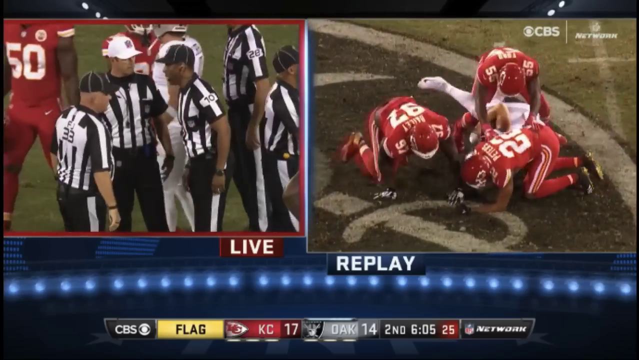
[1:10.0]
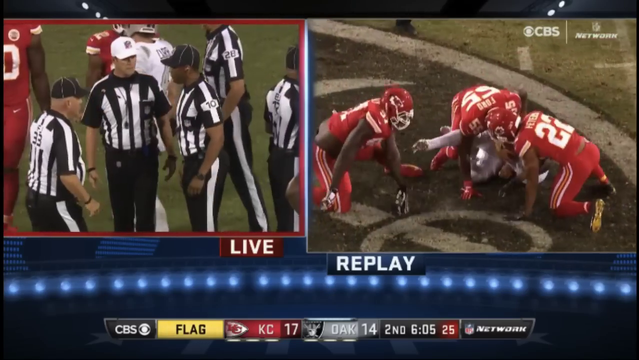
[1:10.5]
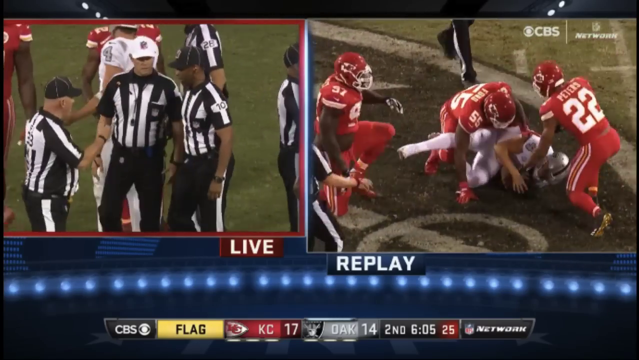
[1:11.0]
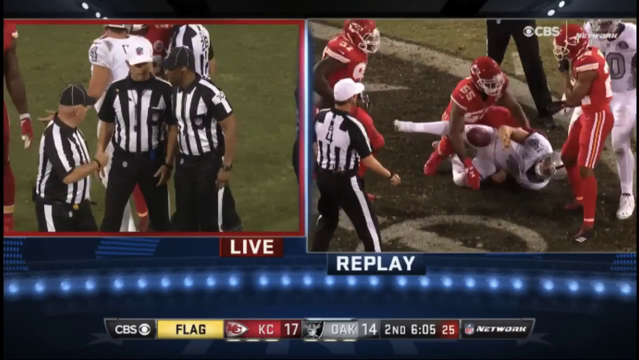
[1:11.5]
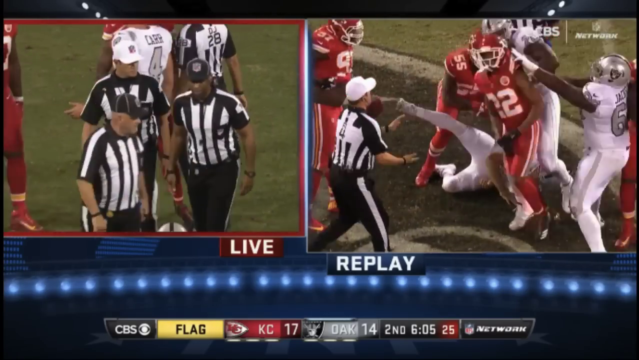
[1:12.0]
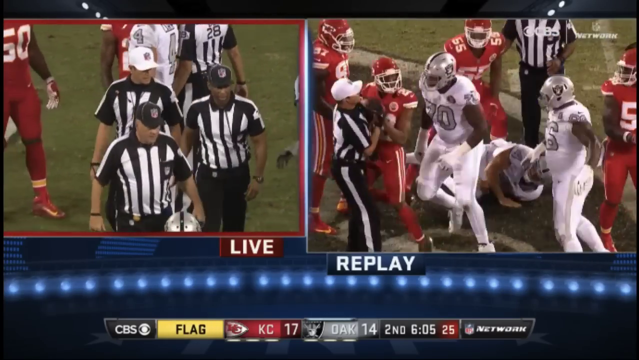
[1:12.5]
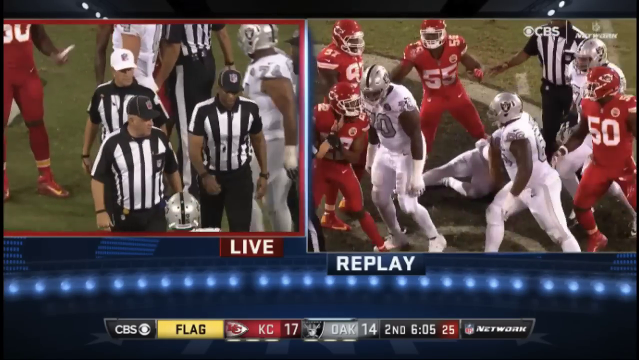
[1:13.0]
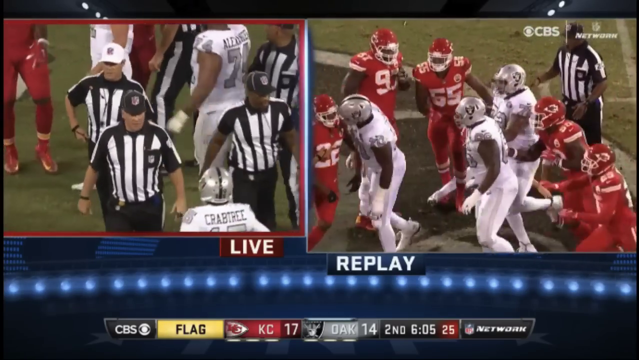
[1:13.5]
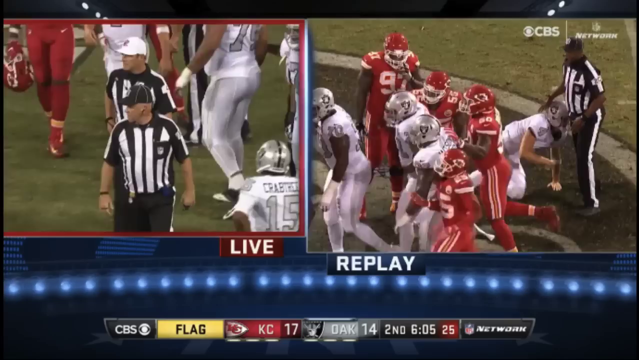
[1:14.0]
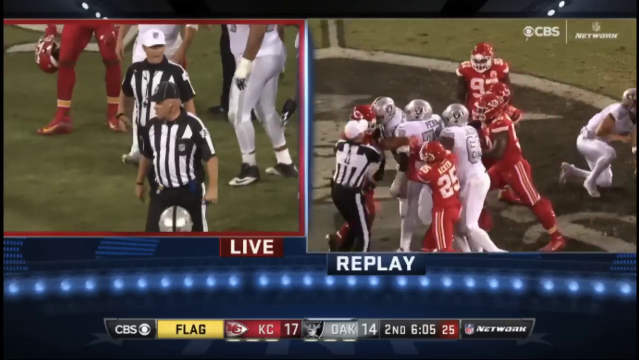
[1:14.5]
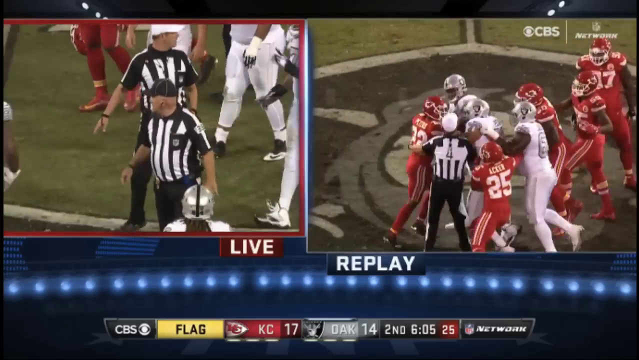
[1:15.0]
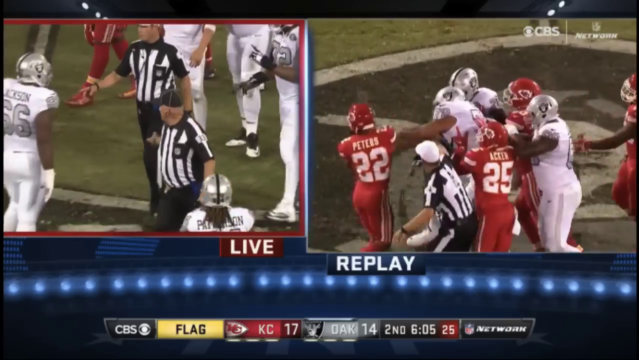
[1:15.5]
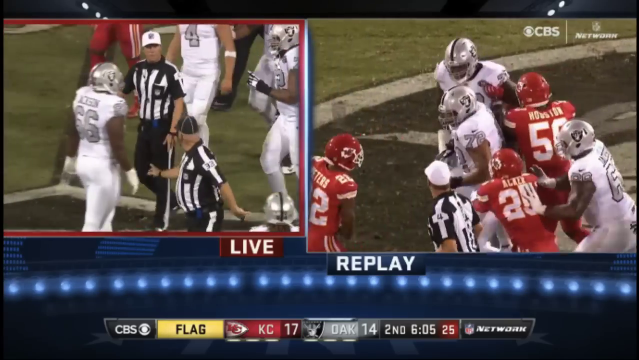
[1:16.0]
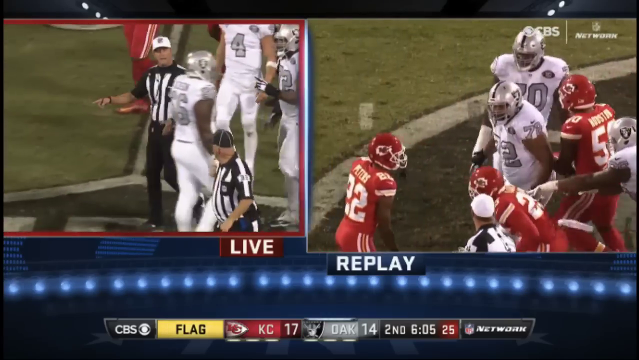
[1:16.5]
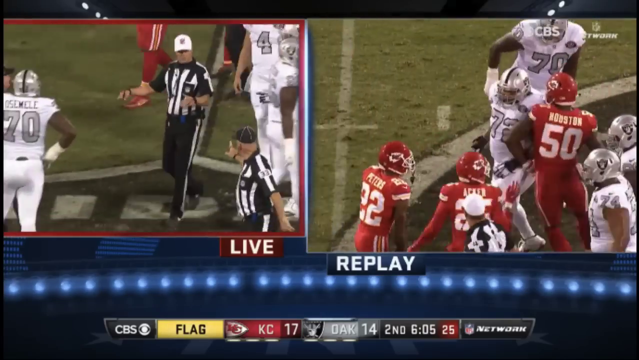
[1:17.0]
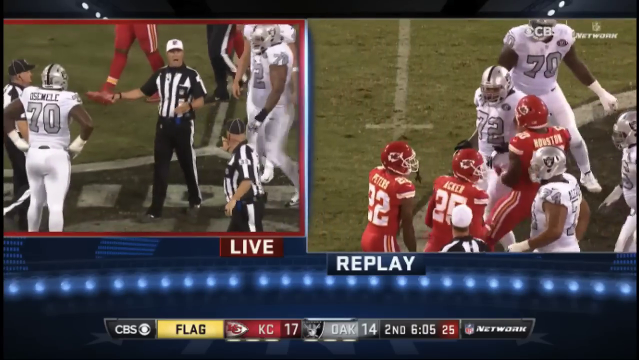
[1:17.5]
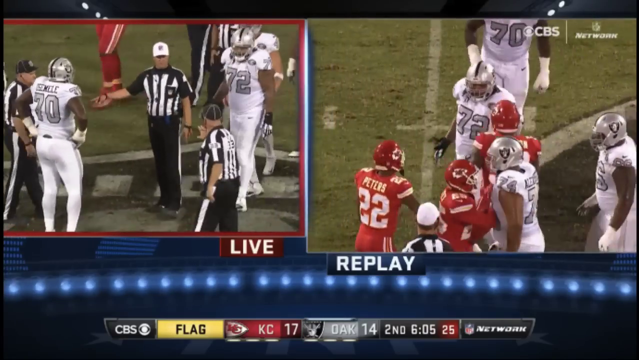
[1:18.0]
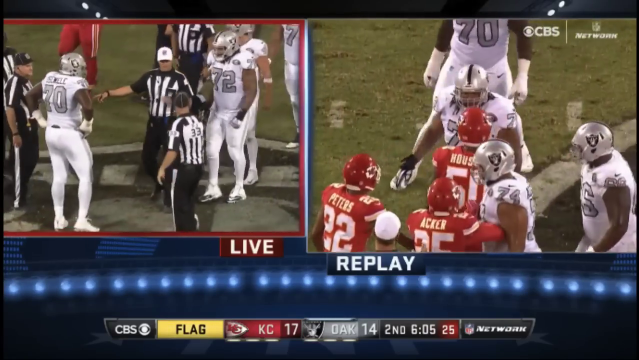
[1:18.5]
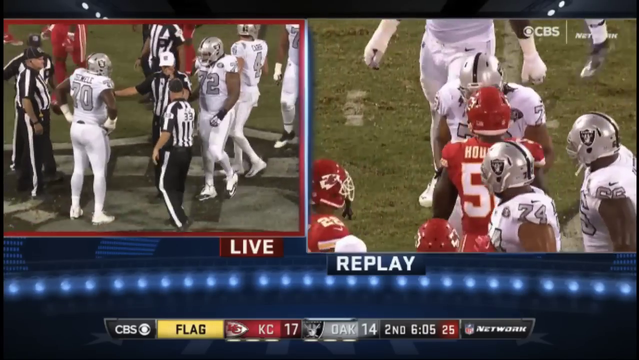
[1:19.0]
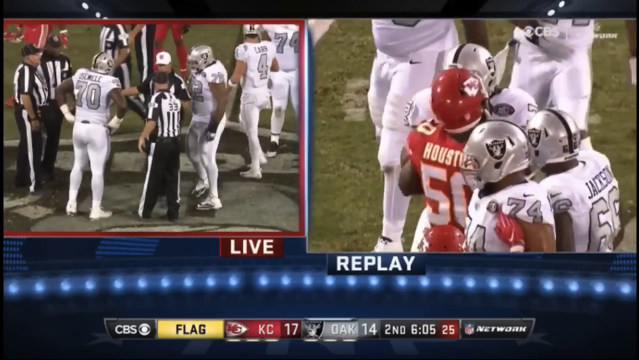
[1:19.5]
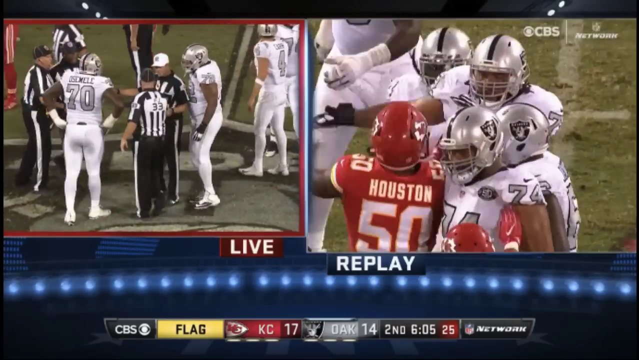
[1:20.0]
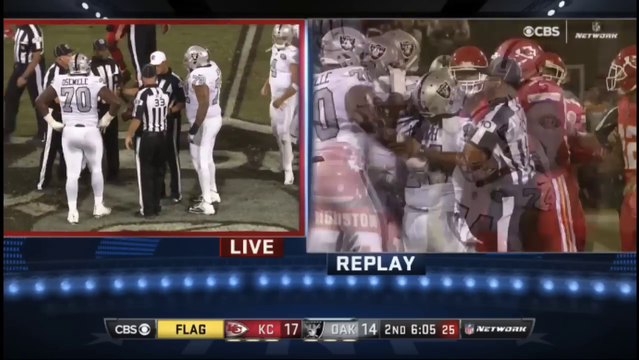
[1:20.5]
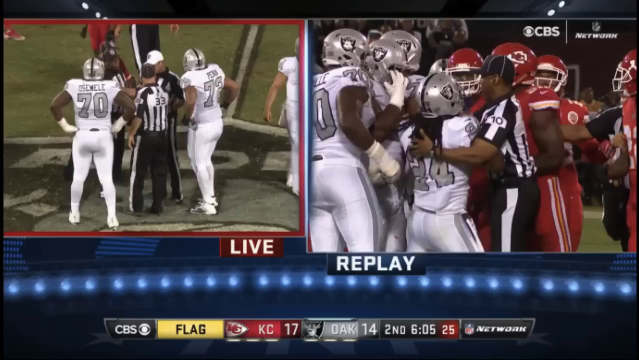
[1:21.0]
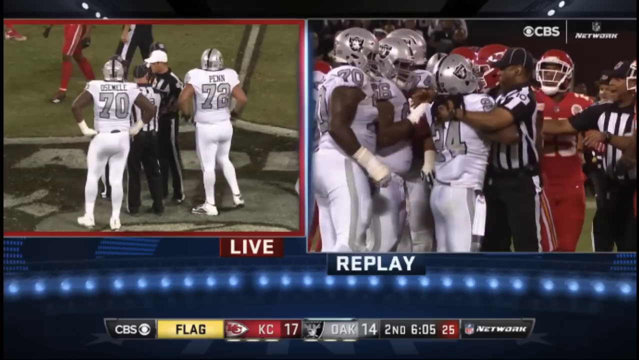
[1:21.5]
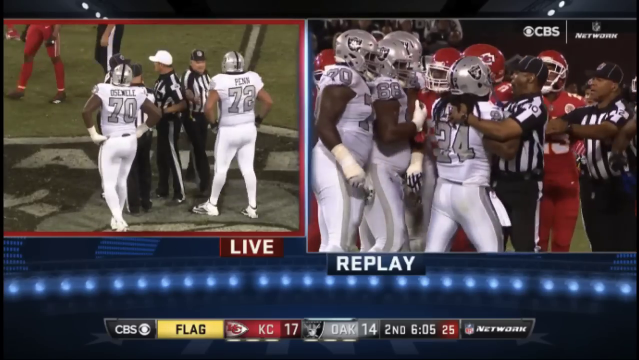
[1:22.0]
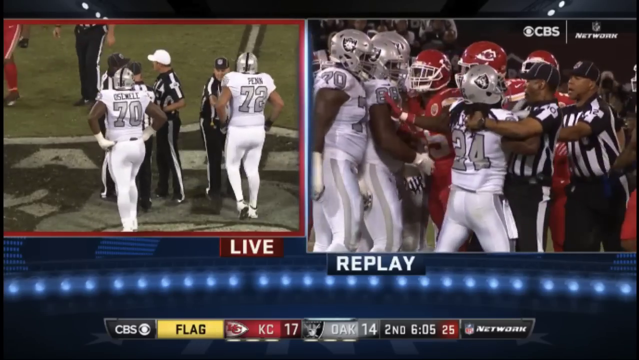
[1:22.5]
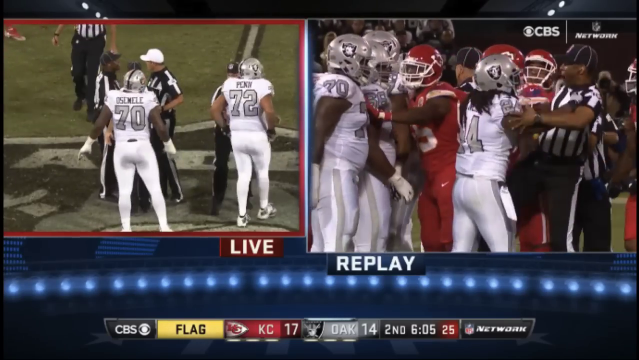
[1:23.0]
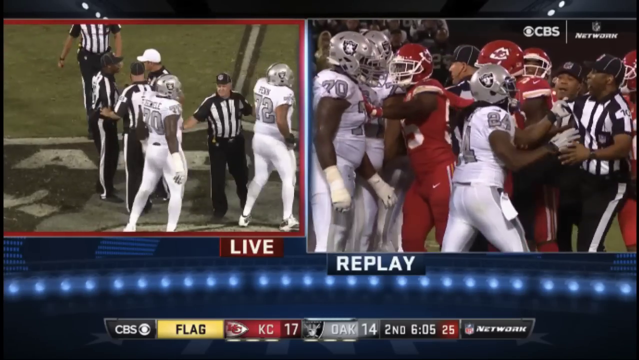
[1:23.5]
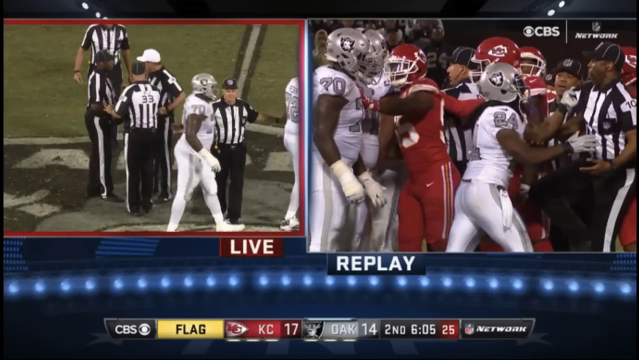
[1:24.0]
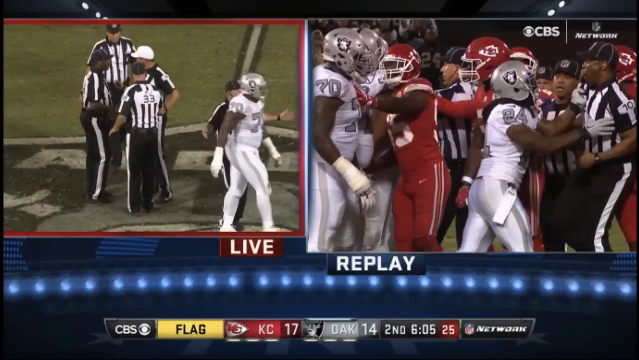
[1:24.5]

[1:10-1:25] The video is titled Marshawn Lynch Gets Ejected for Grabbing a Referee, Chiefs vs Raiders NFL. It shows the initial altercation between Chiefs and Raiders players as the referees get involved. Number 24 on the Raiders grabs at one of the referees, and the referee throws up a yellow flag. More referees get involved separating the players, and number 24 of the Raiders, Marshawn Lynch, leaves the field. The referees huddle together discussing how to handle the play. In a split screen, the referees are on the left and a replay of the initial altercation is on the right. Along the bottom of the video, the scoreboard reads "Kansas City Chiefs 17 vs Oakland Raiders 14." The broadcast is on CBS. The split screen goes away, and the video shows the sidelines, with the coaches from both the Chiefs and the Raiders talking with their players and the referees. Finally, a referee comes to the middle of the field and uses hand signals to call the flag on the play.